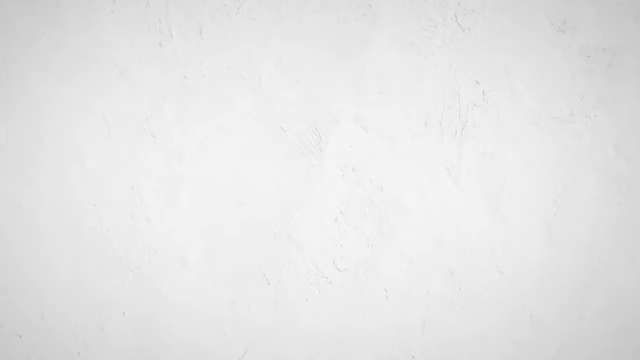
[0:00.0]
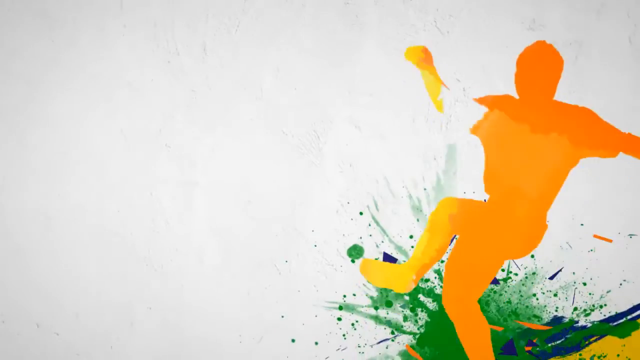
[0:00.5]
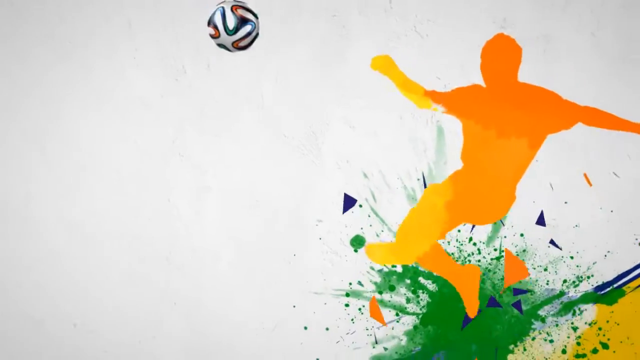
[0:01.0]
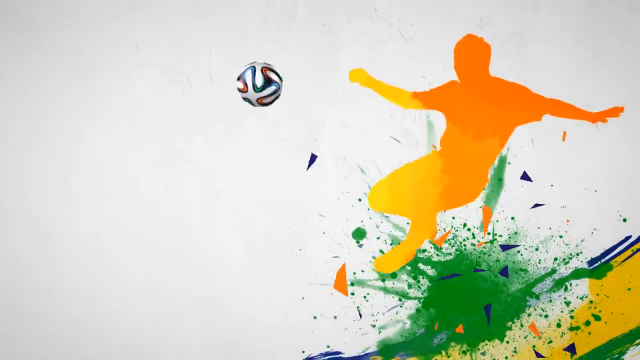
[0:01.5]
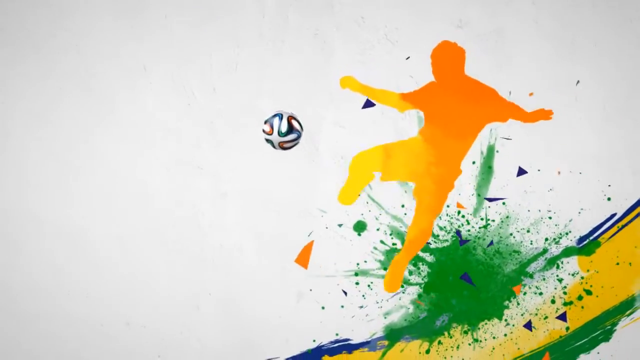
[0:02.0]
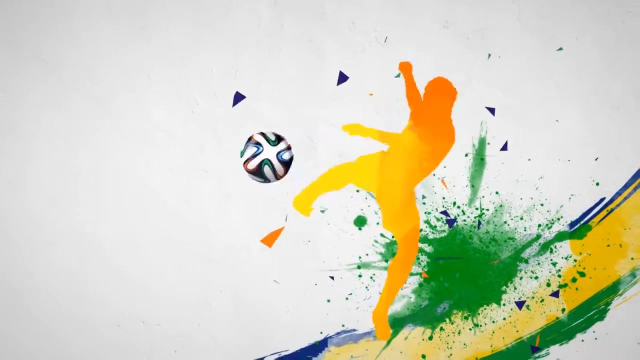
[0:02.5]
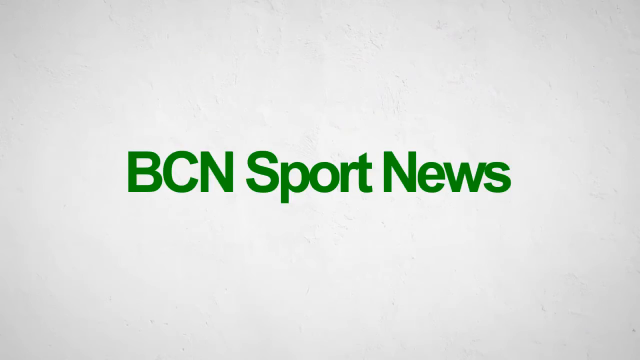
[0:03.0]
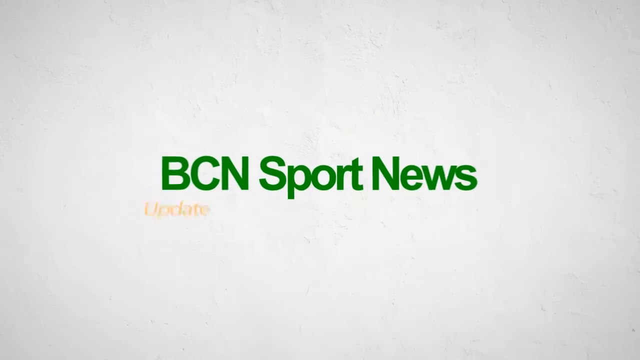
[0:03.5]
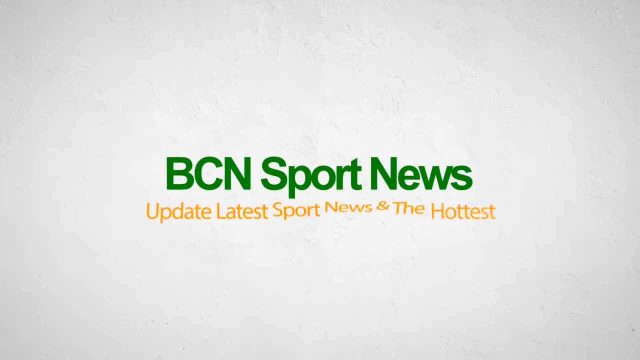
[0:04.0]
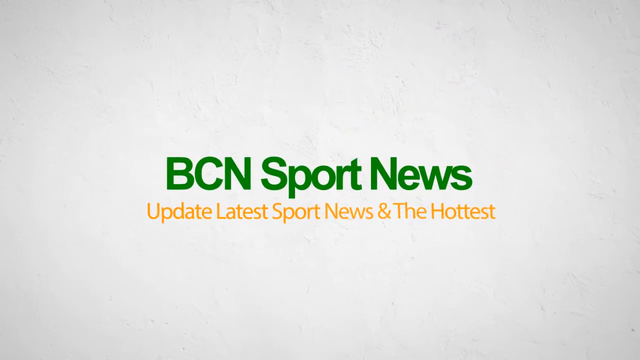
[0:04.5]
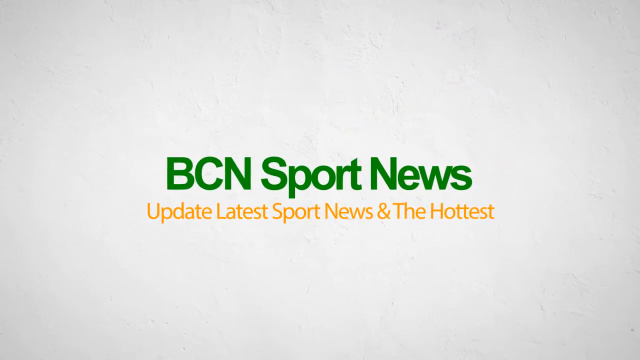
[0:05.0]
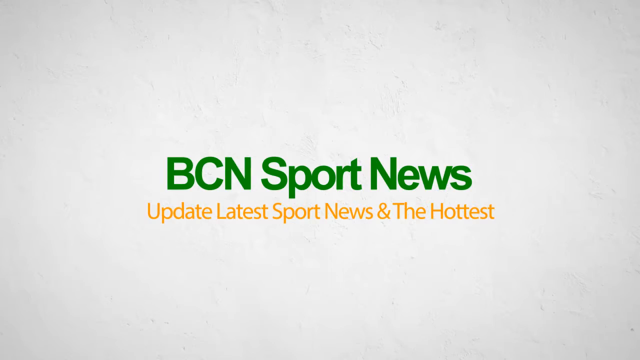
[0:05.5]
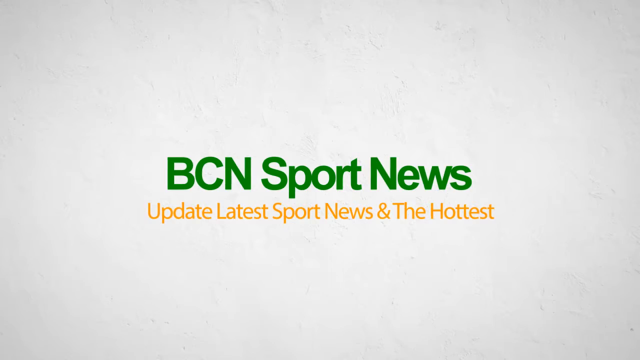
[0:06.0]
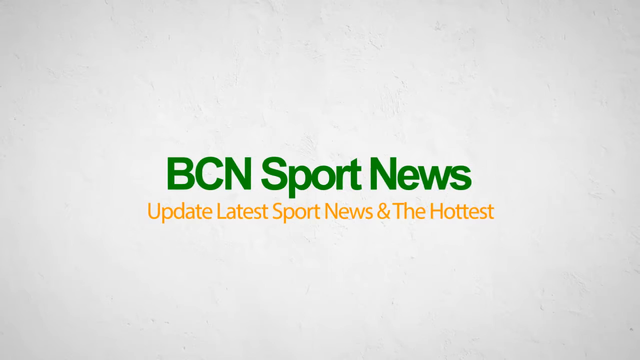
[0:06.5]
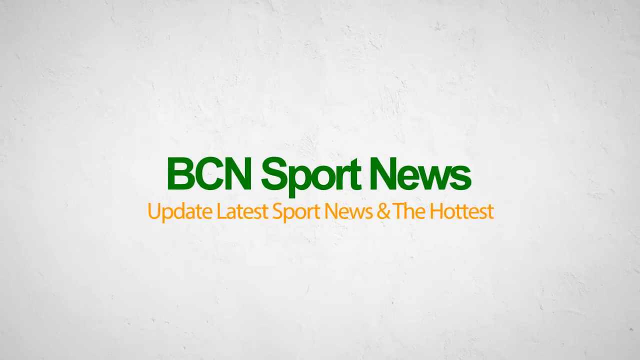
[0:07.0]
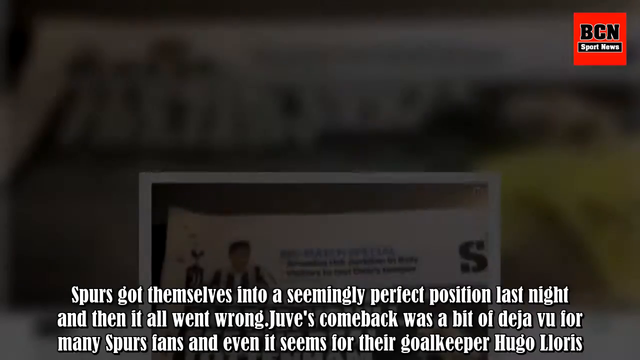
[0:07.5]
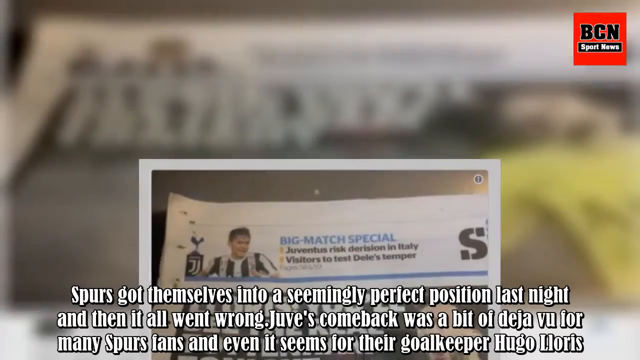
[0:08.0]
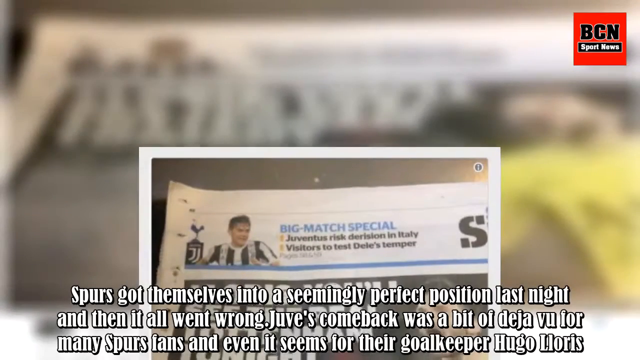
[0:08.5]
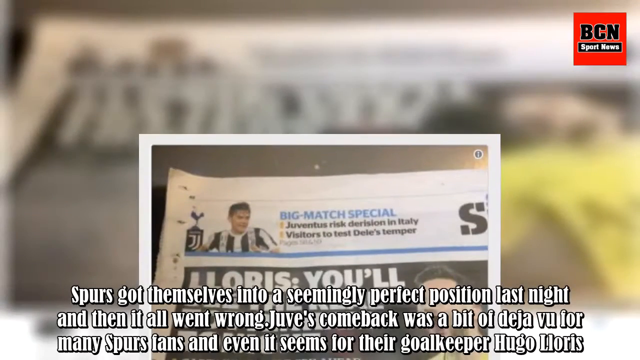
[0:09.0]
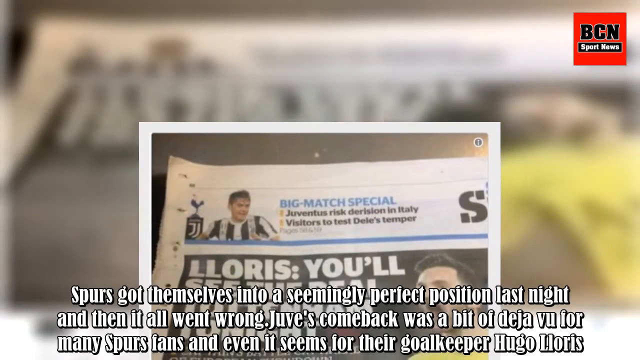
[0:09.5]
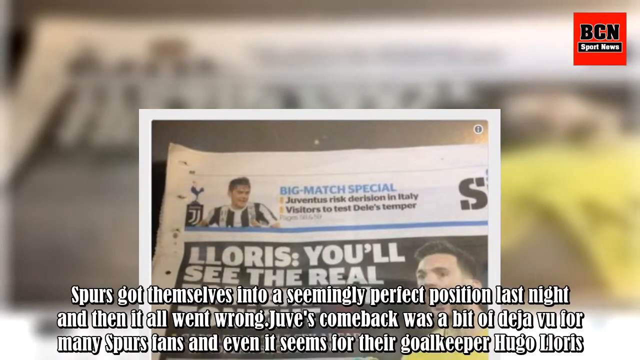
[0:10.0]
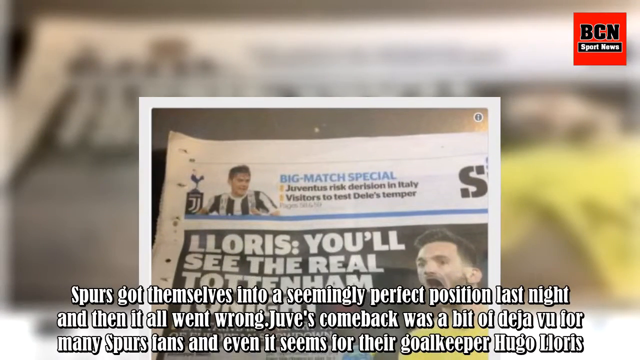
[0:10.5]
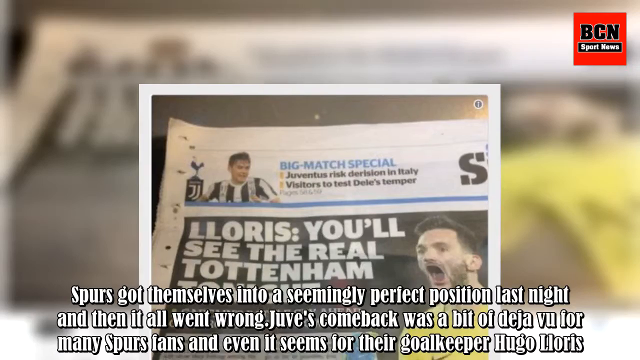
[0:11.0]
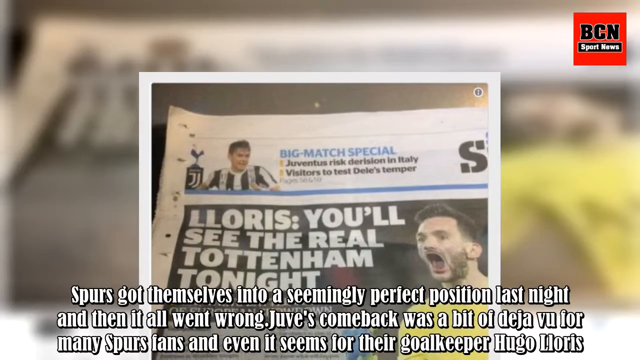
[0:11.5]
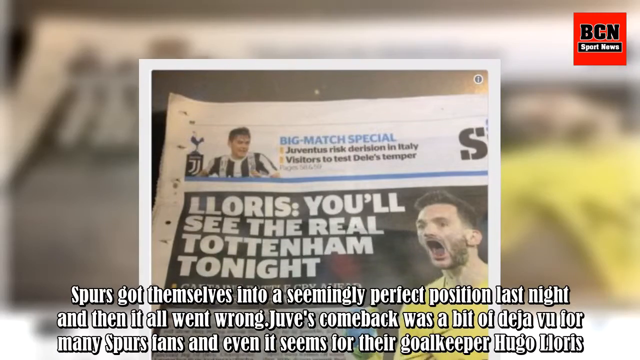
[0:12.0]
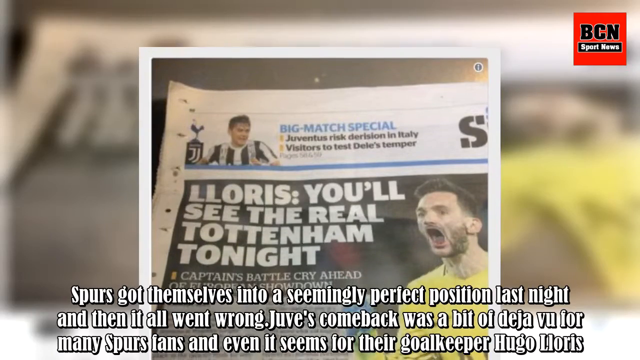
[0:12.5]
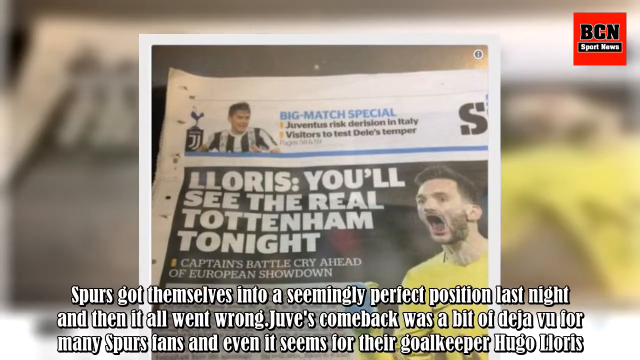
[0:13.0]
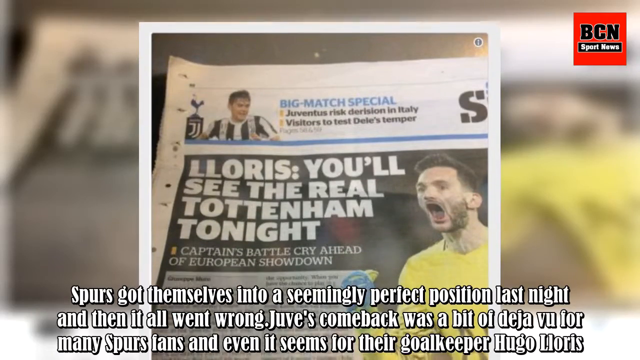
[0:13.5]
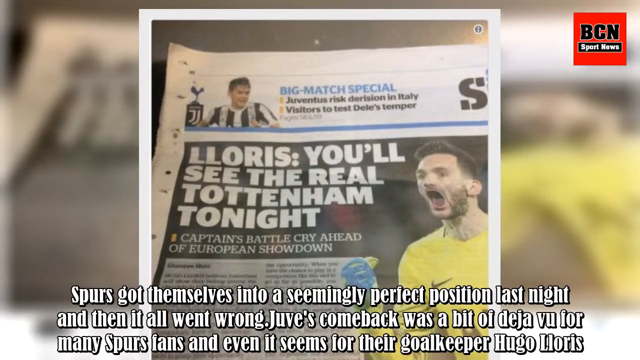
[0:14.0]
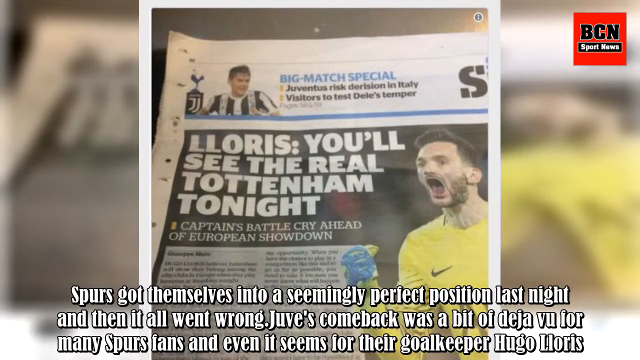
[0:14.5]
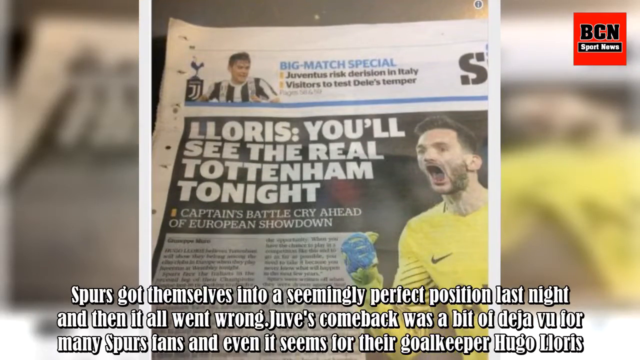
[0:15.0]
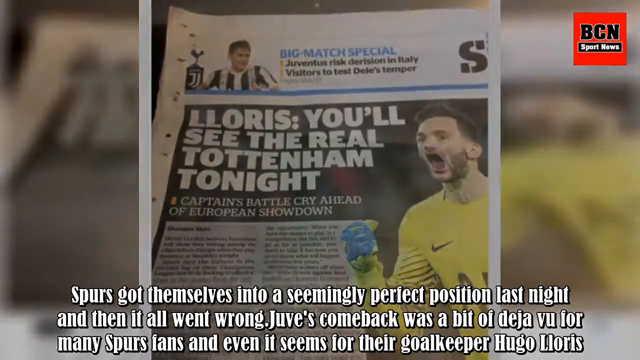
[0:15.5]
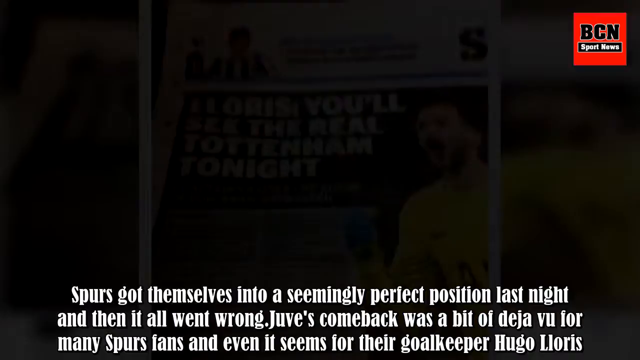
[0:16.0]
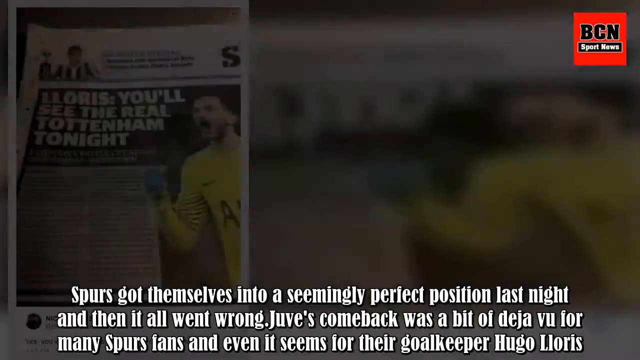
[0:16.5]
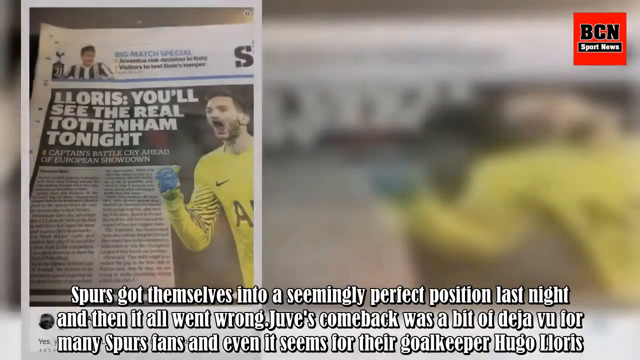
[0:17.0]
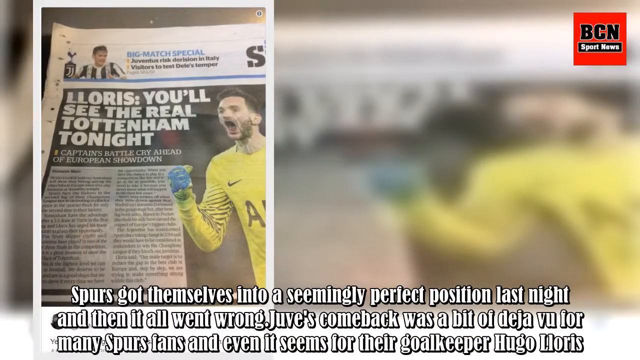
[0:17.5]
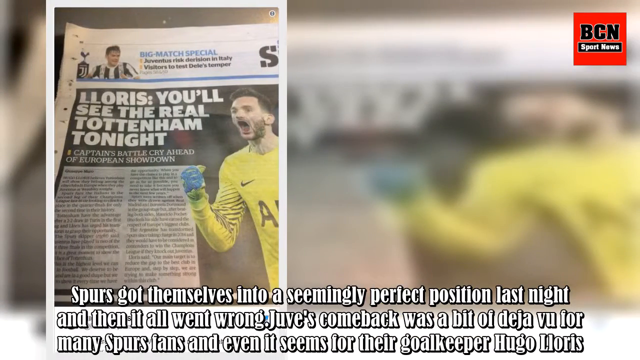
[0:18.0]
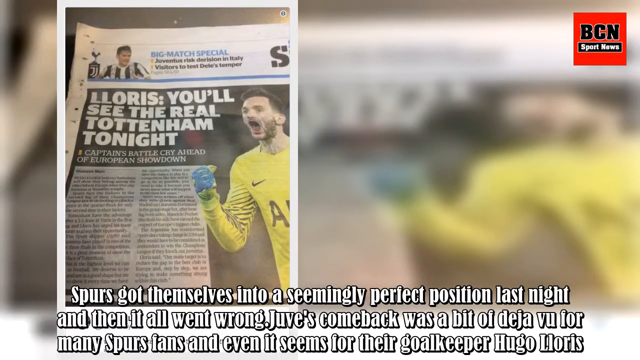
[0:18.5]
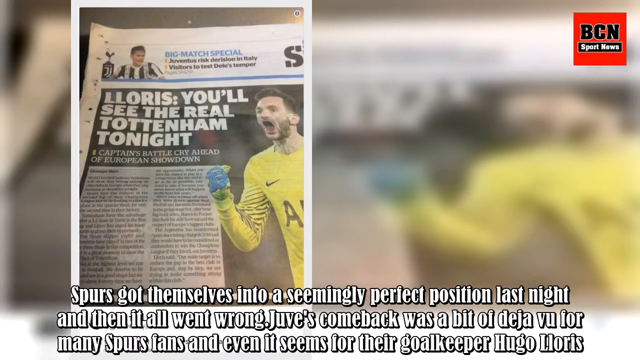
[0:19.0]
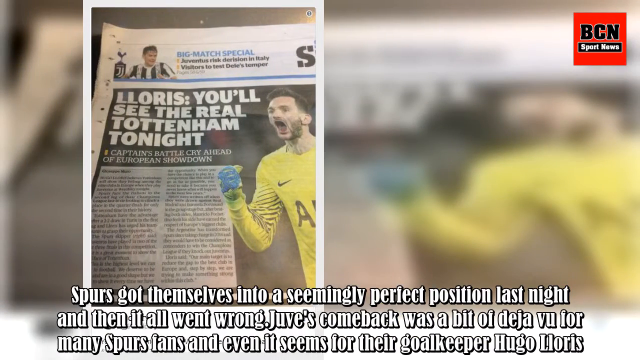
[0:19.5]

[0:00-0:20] Against an all-white background, a human-shaped yellow figure comes in from the right side and kicks a soccer ball. To the right of and behind the figure are splatters of green, yellow and blue paint, and the soccer ball comes toward the viewer. A logo reading "BCN sport news" appears in the center, with "update latest sport news and & hottest" at the bottom. Captions then appear at the bottom, and a red square logo reading "BCN Sport News" is in the top right corner. In the middle is the front cover of a newspaper that reads "Lloris: you'll see the real Tottenham tonight." To the right of the headline, a soccer player with his mouth open is yelling; he appears to be the team's goalie. The captions at the bottom read: "Spurs got themselves into a seemingly perfect position last night, and then it all went wrong. Juve's comeback was a bit of deja vu for many Spurs fans, and even it seems for their goalkeeper, Hugo Lloris." The same newspaper front cover then appears on the left side and moves to the right.